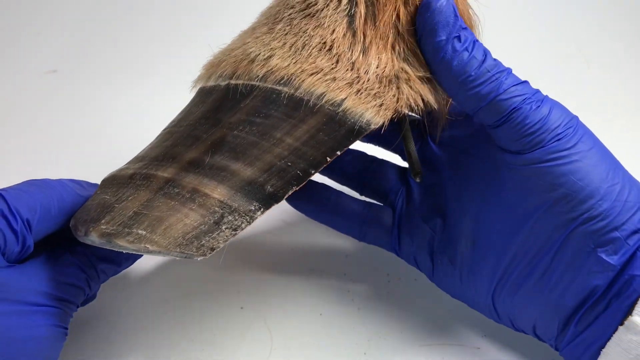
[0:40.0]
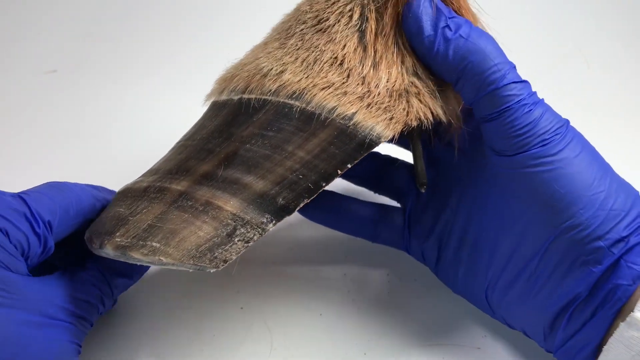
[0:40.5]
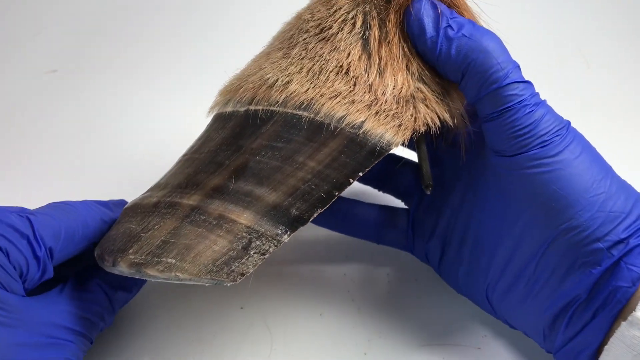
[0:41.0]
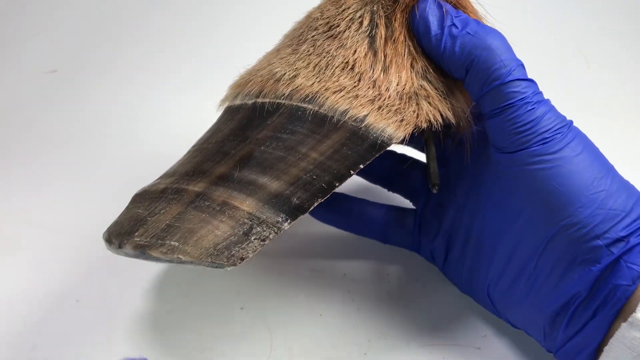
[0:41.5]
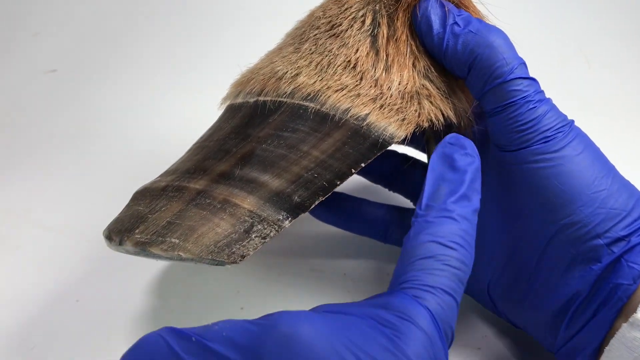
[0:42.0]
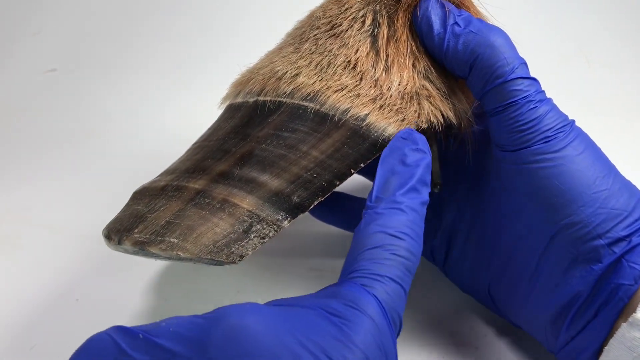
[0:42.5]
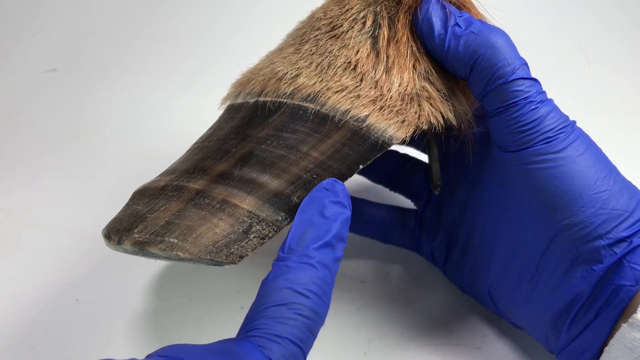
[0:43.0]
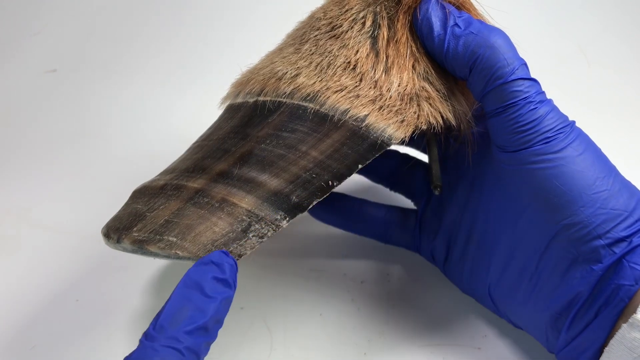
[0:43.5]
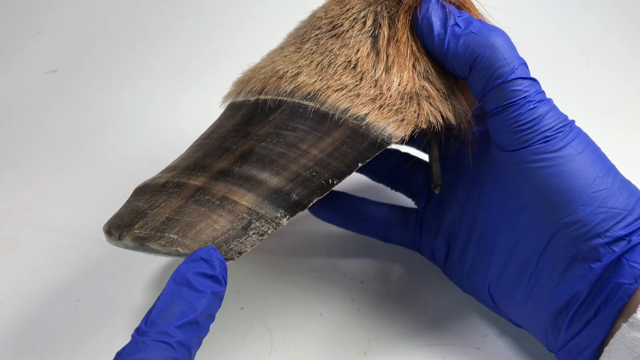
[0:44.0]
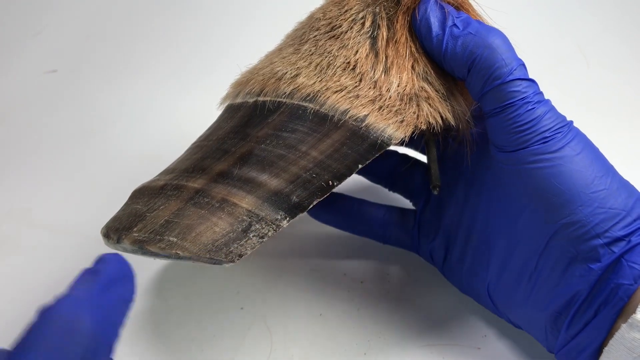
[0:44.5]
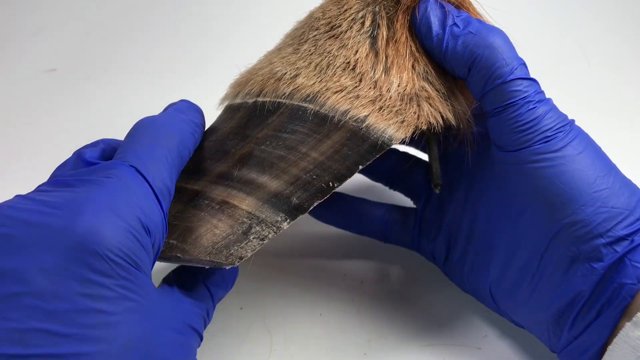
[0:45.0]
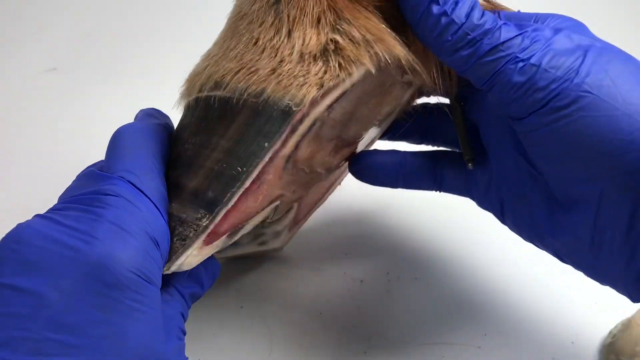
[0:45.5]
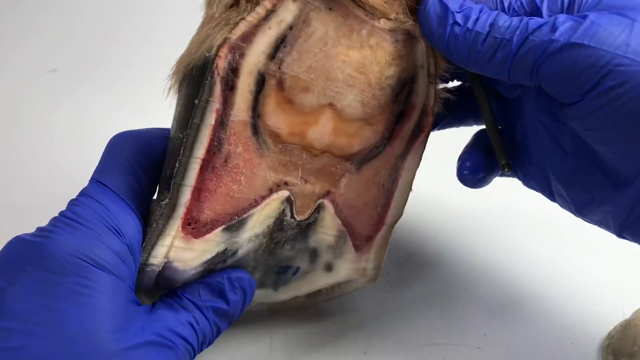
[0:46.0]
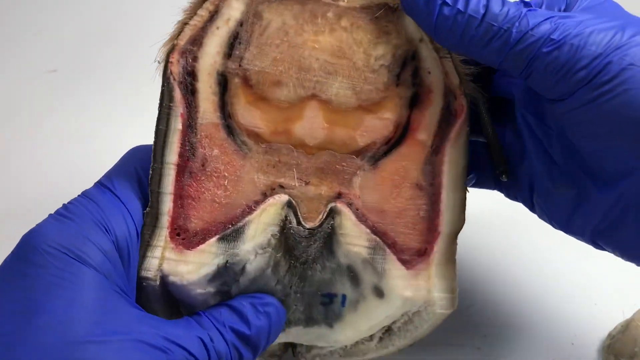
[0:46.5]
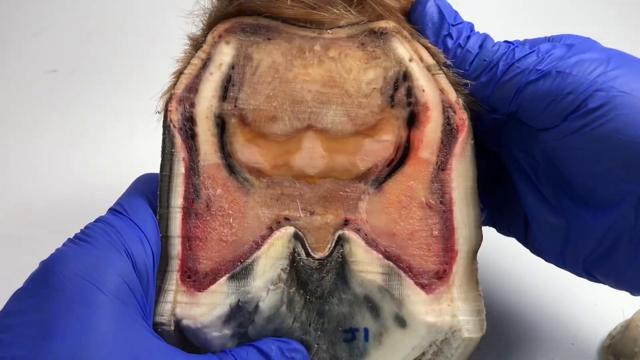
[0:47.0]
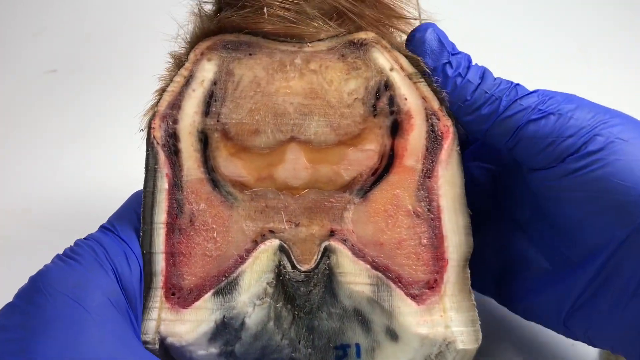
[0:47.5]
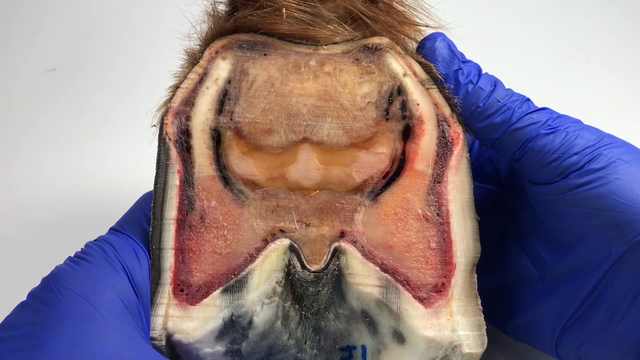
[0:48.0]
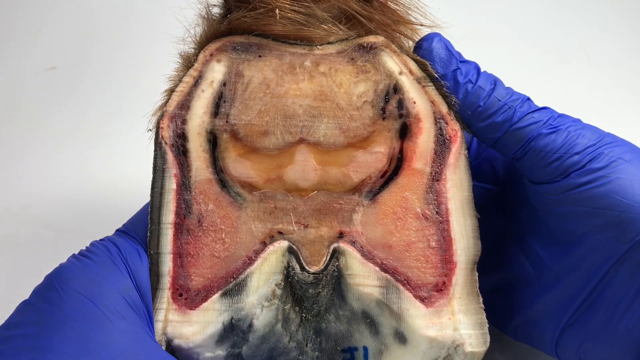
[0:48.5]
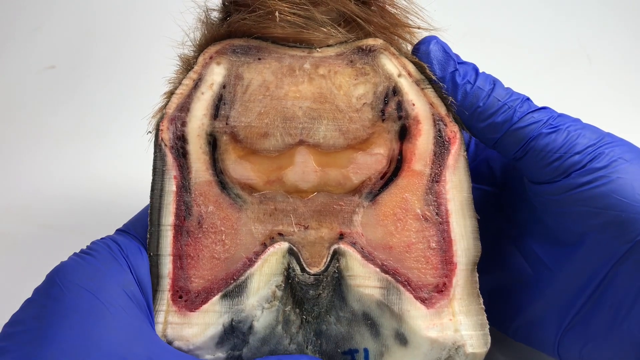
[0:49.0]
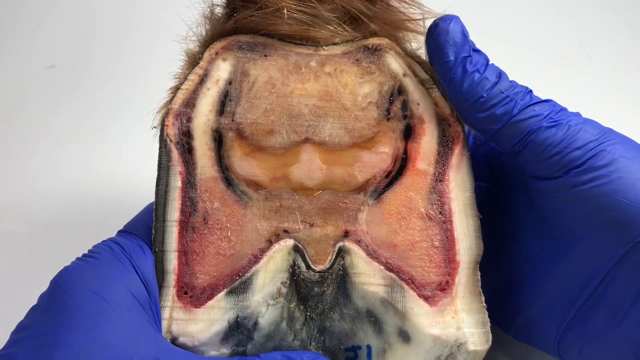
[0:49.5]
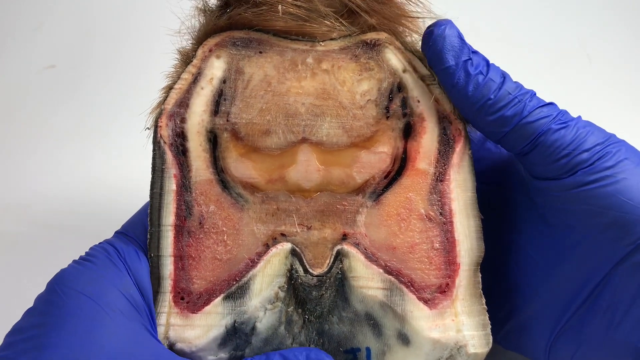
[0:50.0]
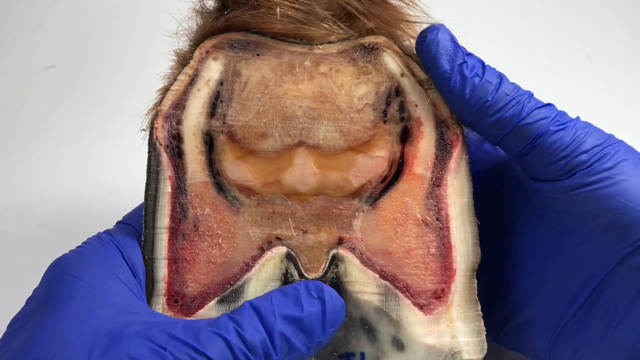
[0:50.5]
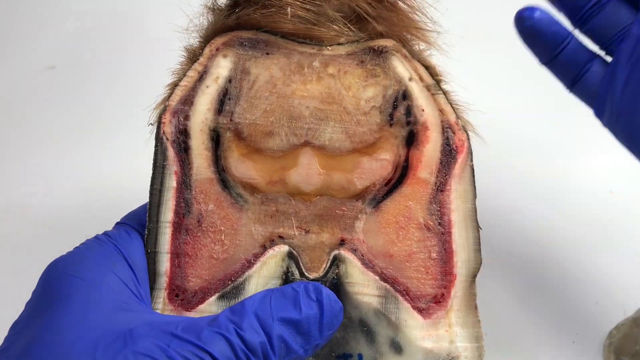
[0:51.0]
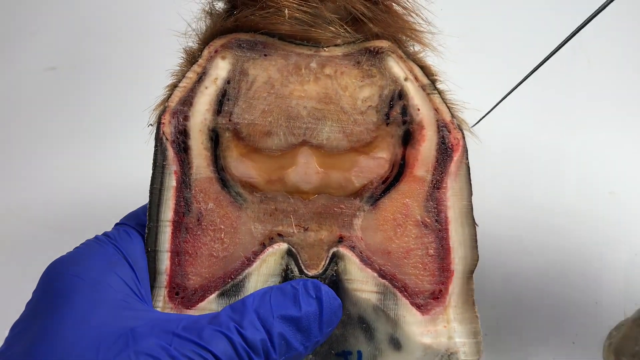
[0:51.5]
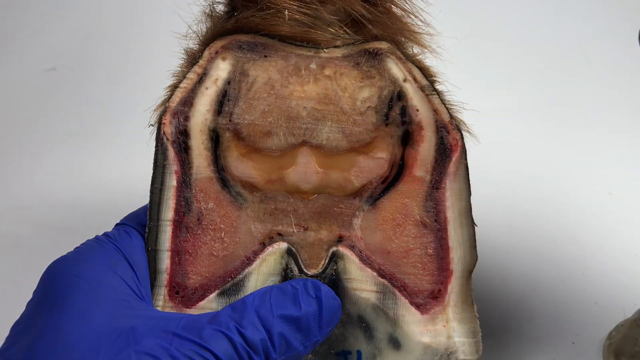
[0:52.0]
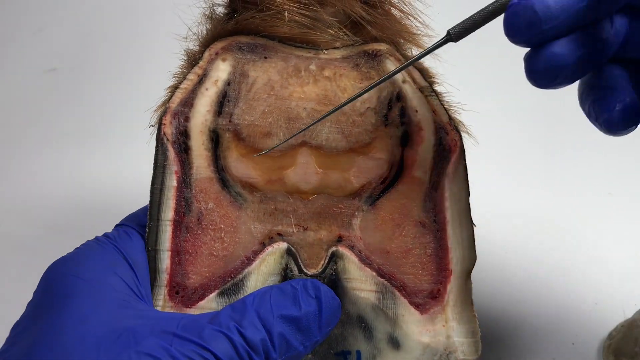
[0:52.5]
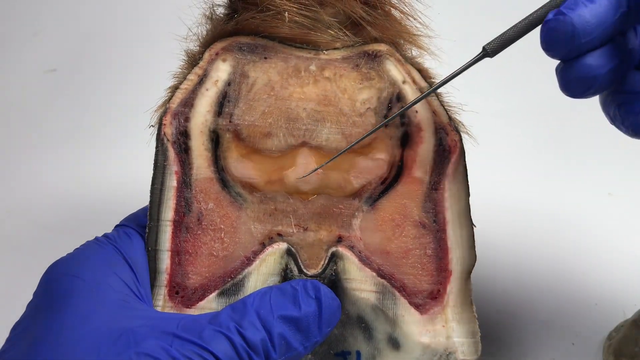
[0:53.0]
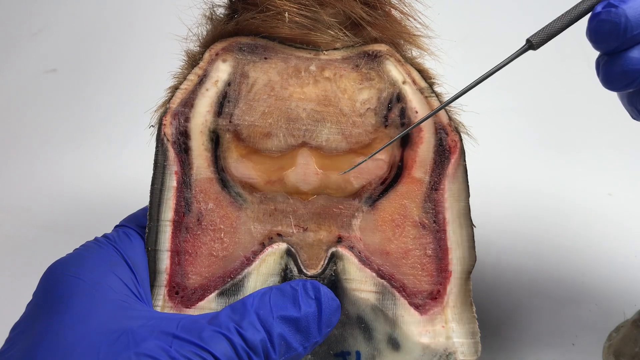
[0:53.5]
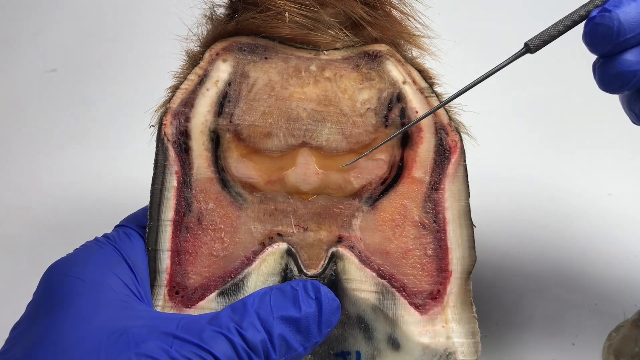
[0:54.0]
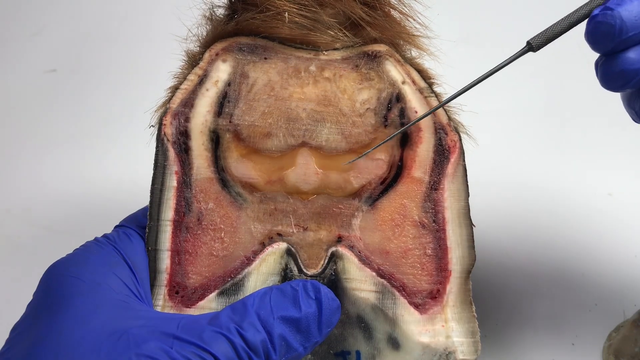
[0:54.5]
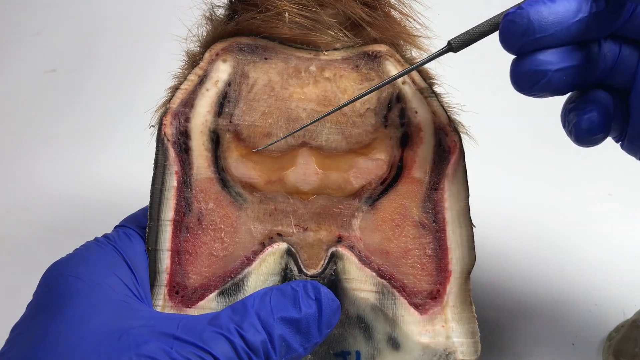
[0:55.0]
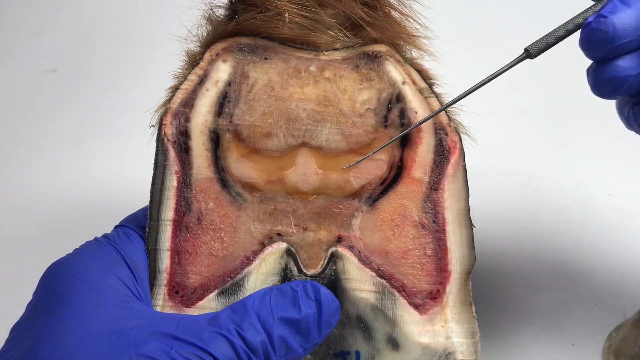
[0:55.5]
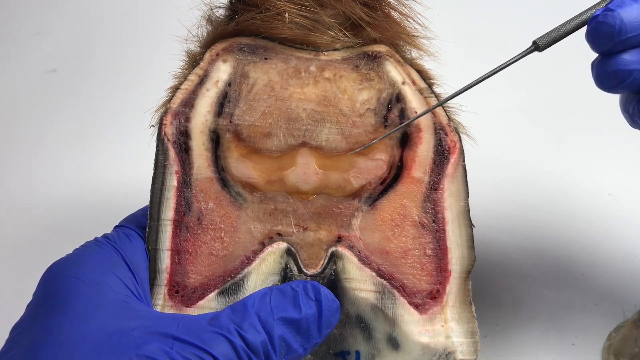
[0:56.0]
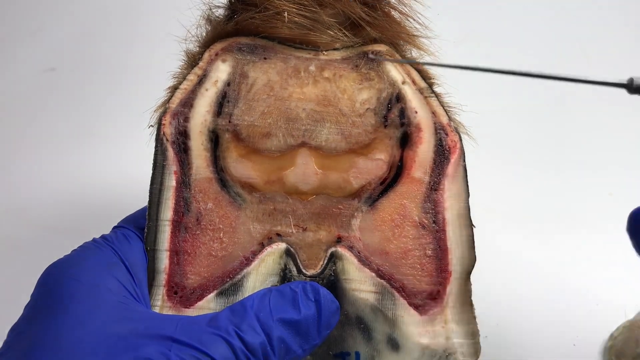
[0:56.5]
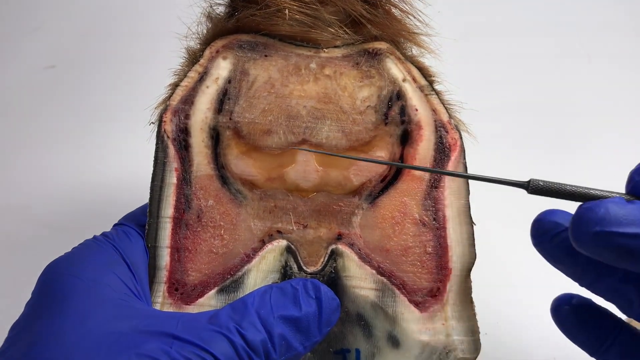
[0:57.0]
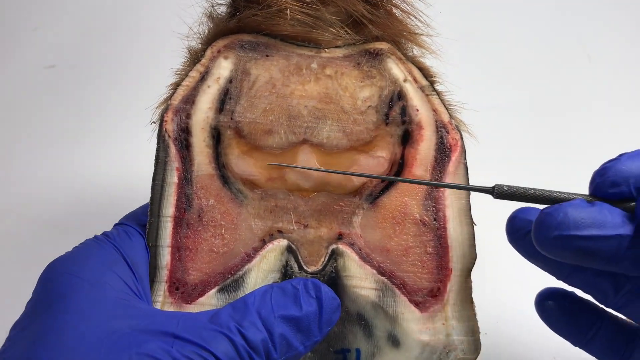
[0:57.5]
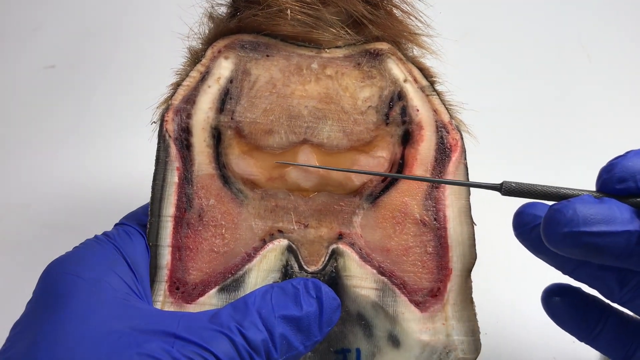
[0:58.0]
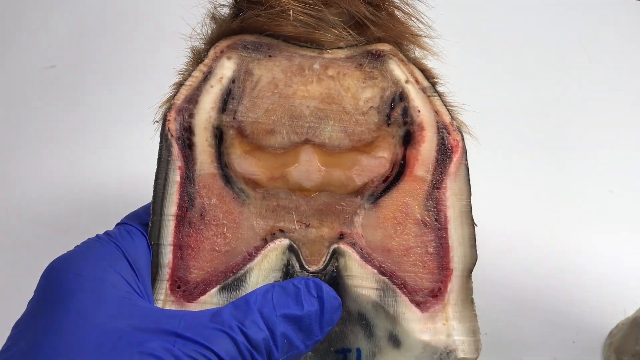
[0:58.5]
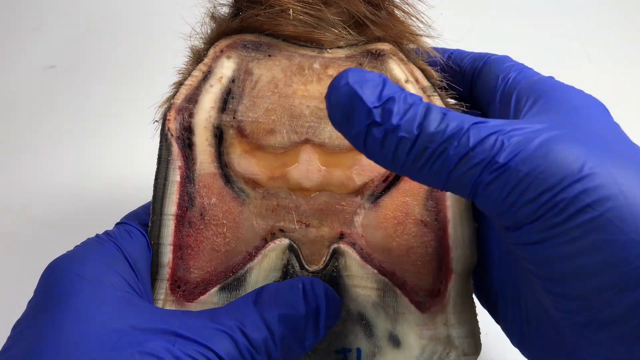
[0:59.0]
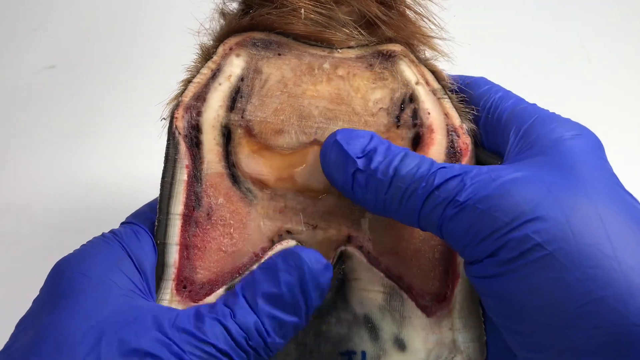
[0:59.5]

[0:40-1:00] The person, wearing medium to navy dark blue gloves, rotates the horse hoof over and around in both hands. The hoof is black and the fur is a tannish reddish color. The background is white. A finger on their left hand points downward, then they flip the hoof over, revealing what looks like the inside, apparently bone and possibly bone marrow. The hoof looks dissected, apparently cut in half. With a little pin in their right hand, they point to different areas inside the hoof. They then seem to be getting ready to feel it, maybe squeeze it. It is possibly a diagram of the inside of a horse, and it is unclear whether it is real or a replica. Tan fur is visible on it.